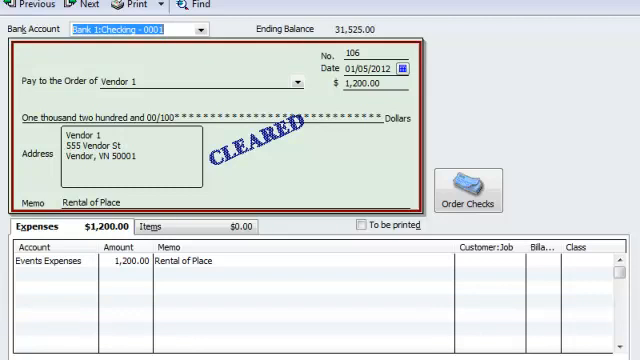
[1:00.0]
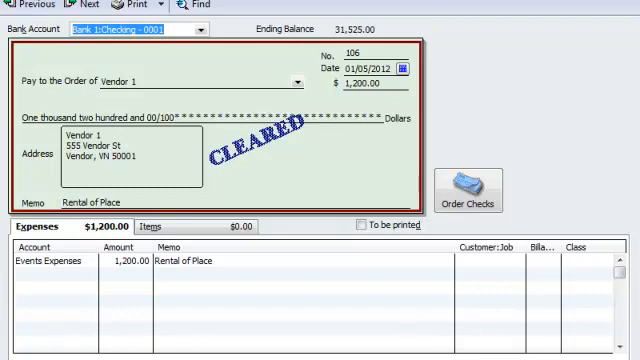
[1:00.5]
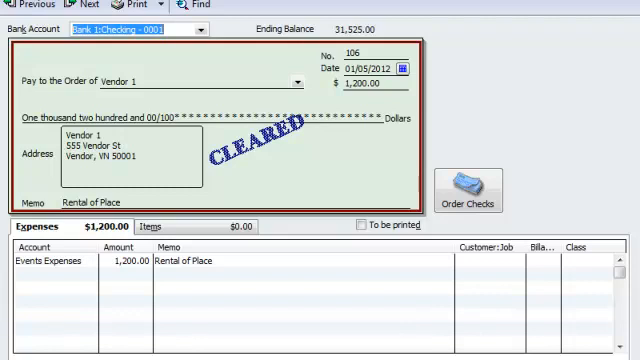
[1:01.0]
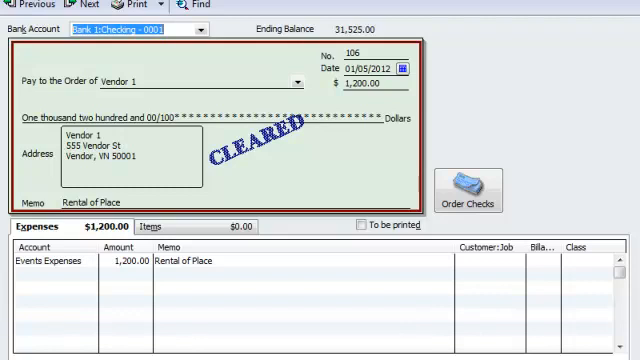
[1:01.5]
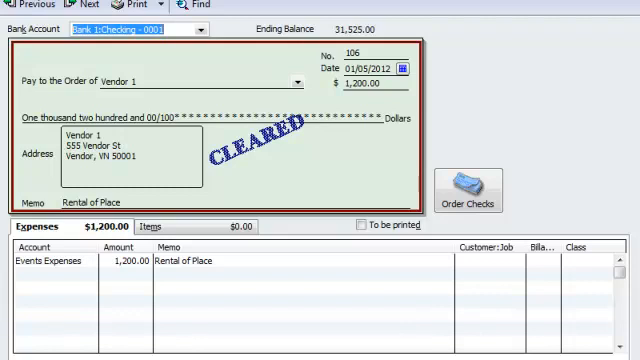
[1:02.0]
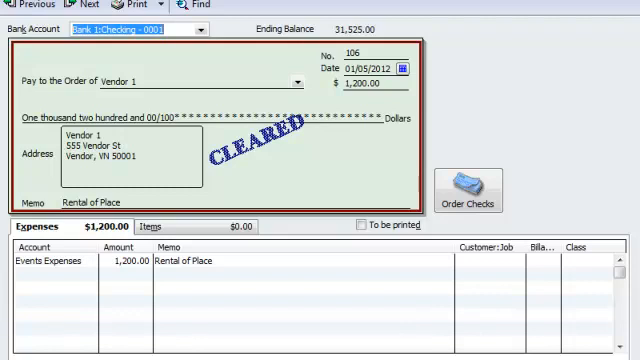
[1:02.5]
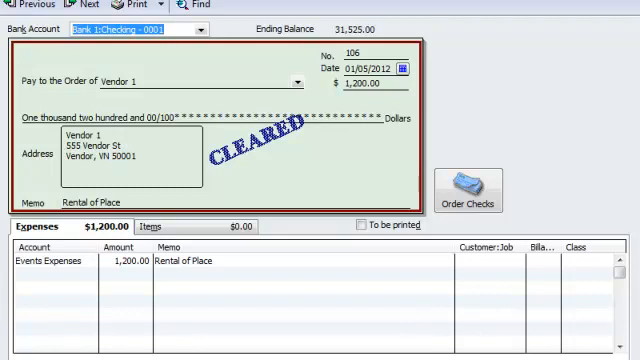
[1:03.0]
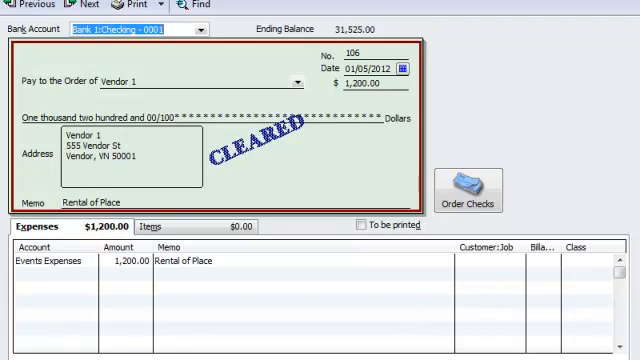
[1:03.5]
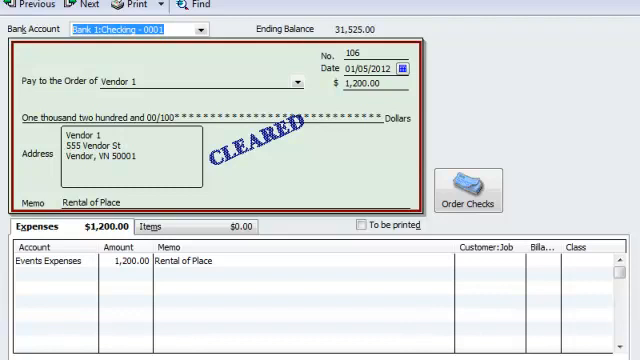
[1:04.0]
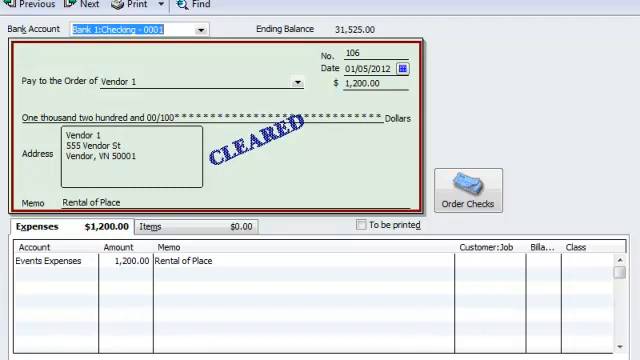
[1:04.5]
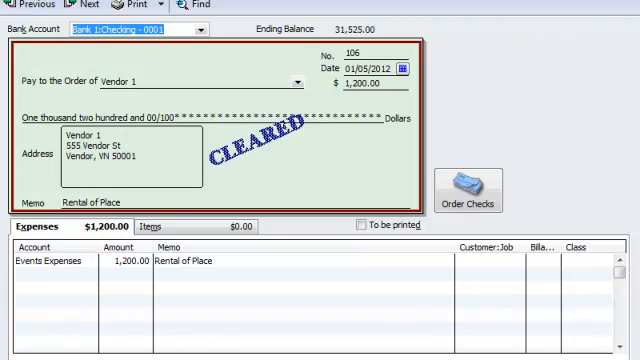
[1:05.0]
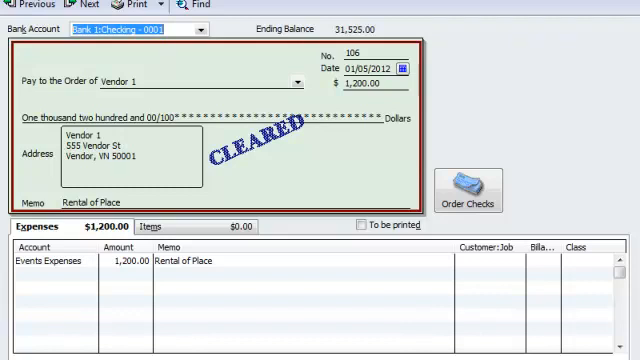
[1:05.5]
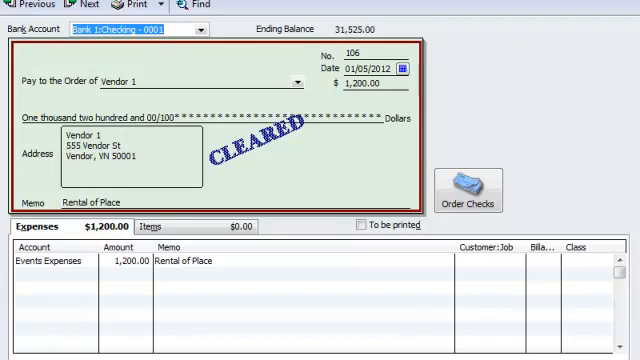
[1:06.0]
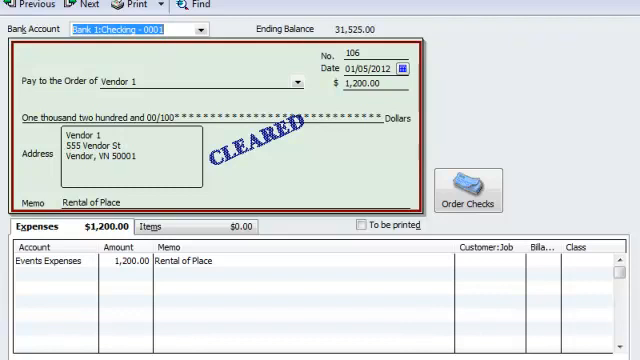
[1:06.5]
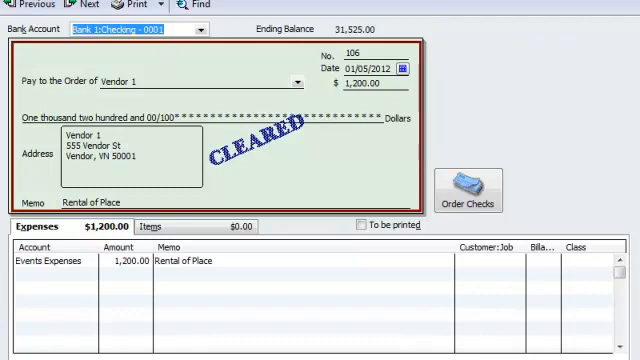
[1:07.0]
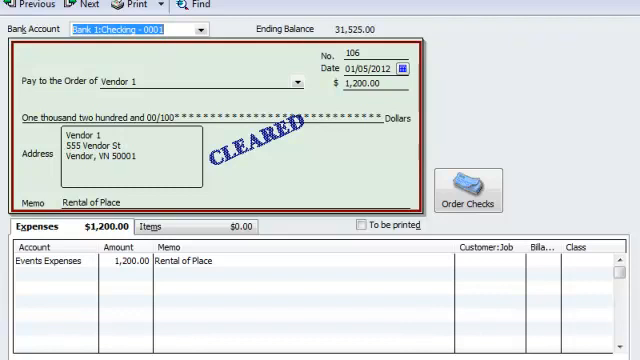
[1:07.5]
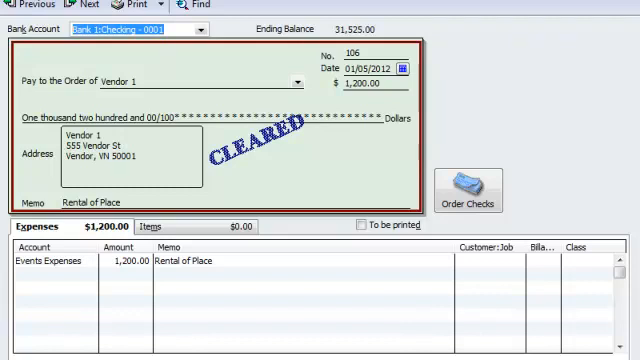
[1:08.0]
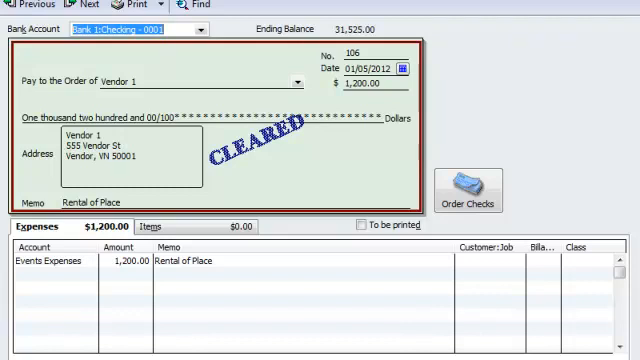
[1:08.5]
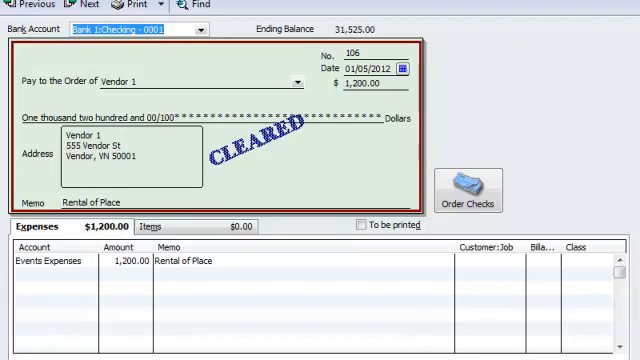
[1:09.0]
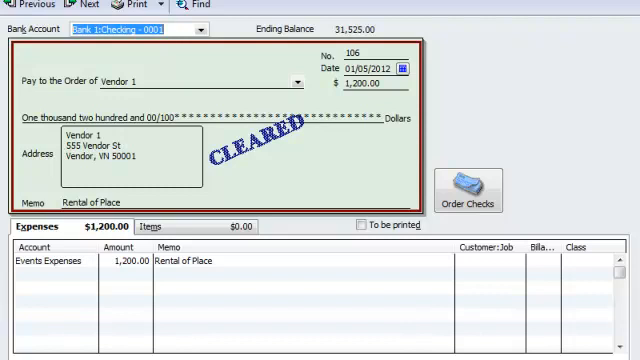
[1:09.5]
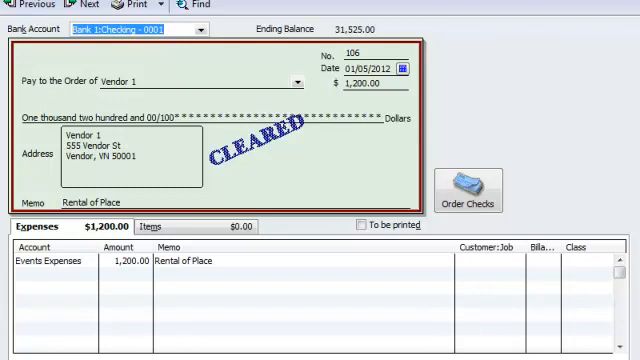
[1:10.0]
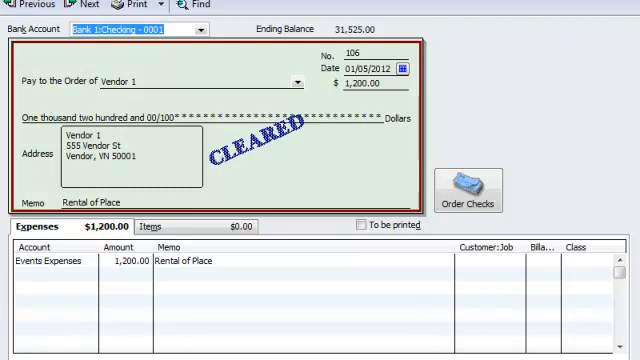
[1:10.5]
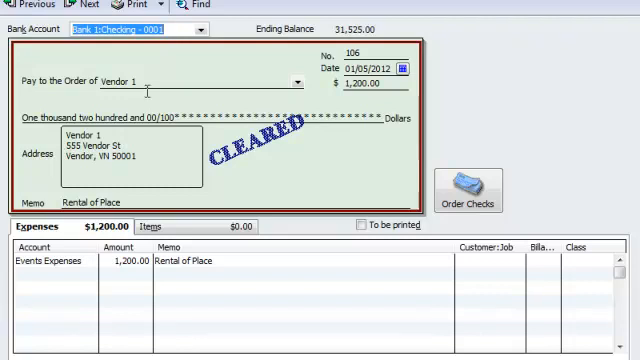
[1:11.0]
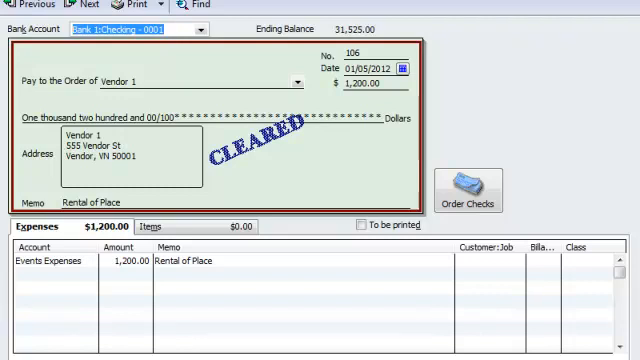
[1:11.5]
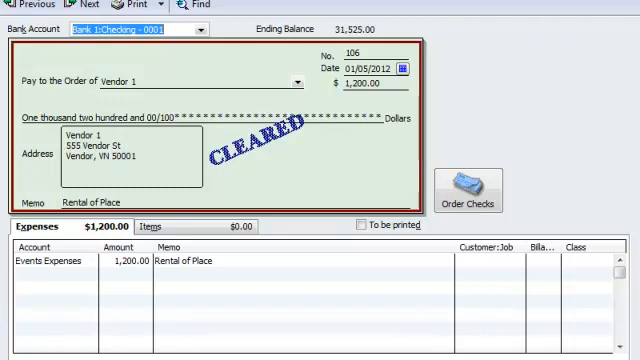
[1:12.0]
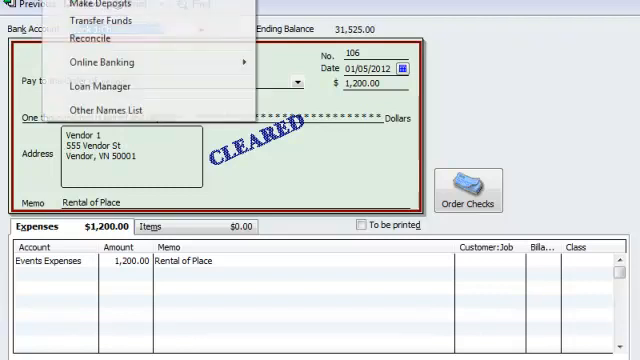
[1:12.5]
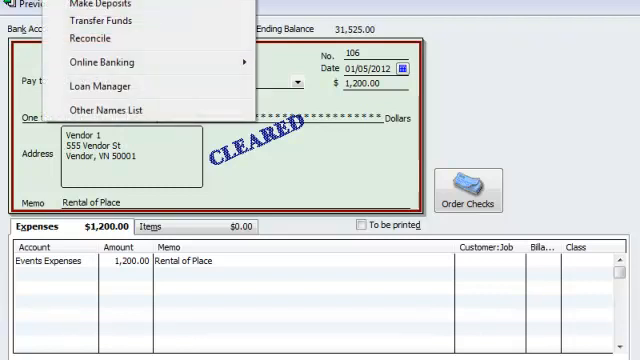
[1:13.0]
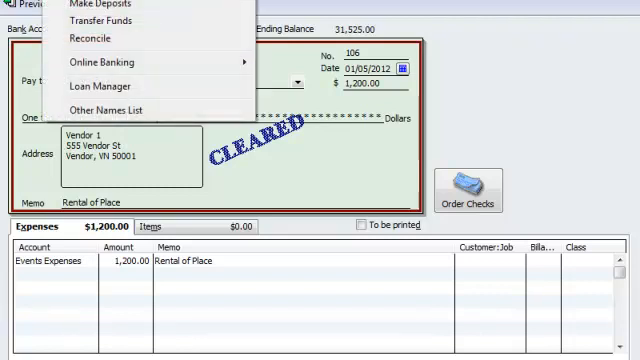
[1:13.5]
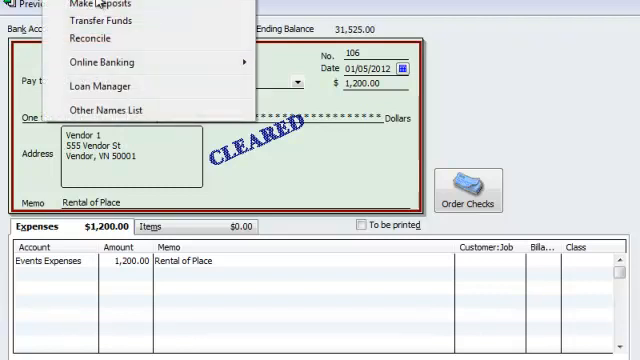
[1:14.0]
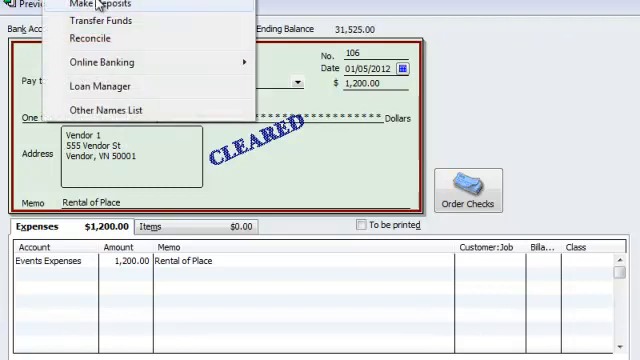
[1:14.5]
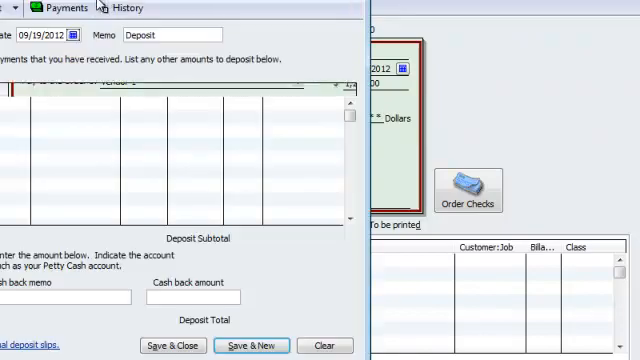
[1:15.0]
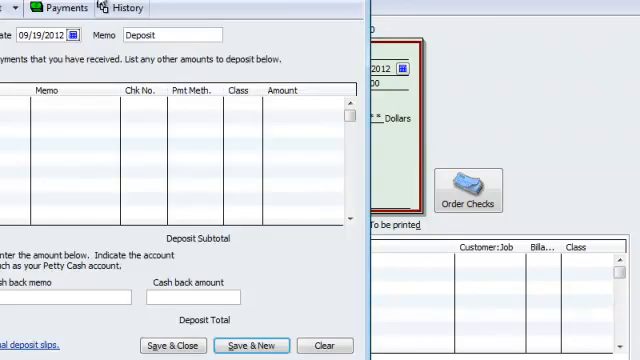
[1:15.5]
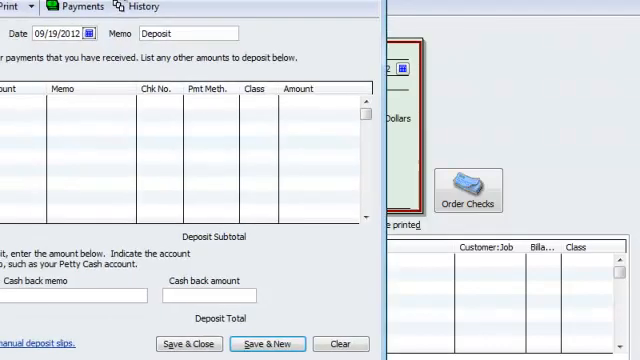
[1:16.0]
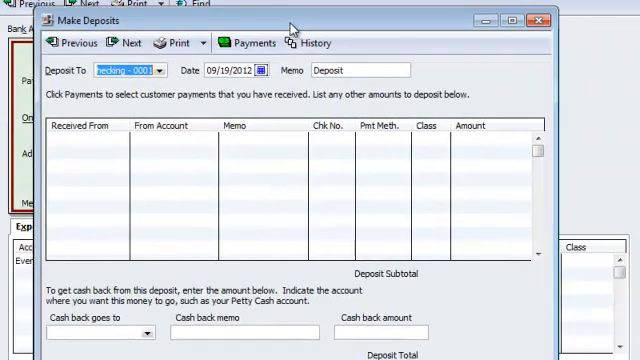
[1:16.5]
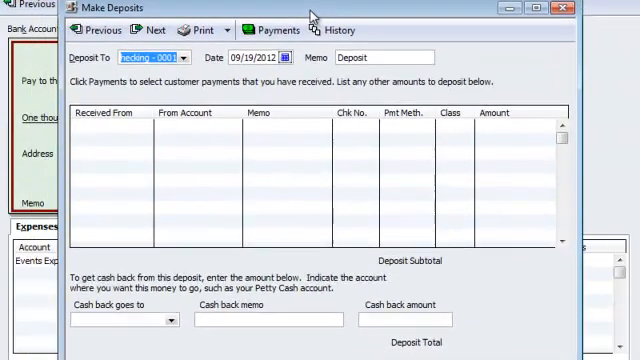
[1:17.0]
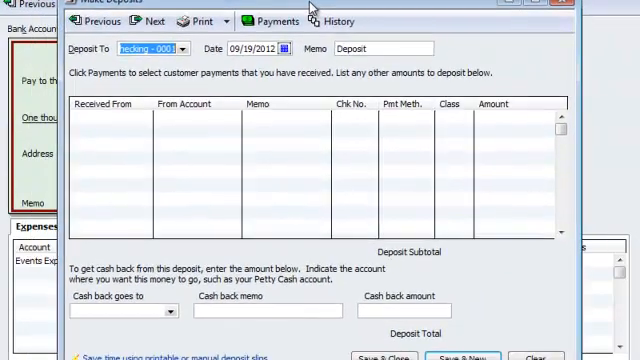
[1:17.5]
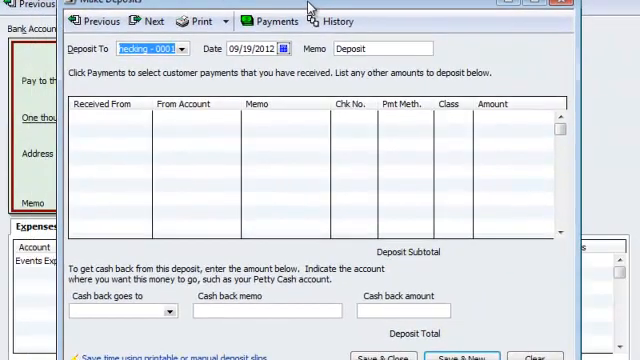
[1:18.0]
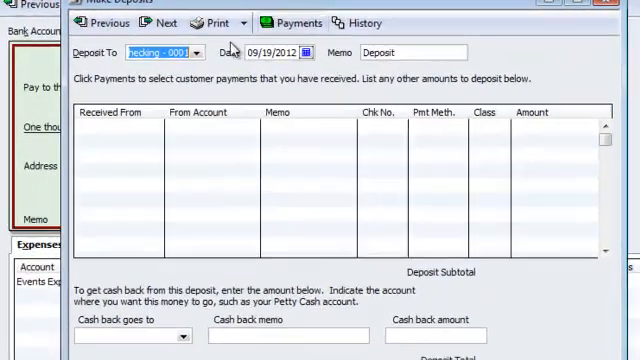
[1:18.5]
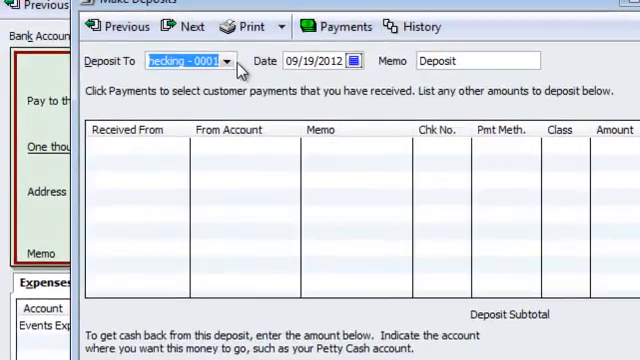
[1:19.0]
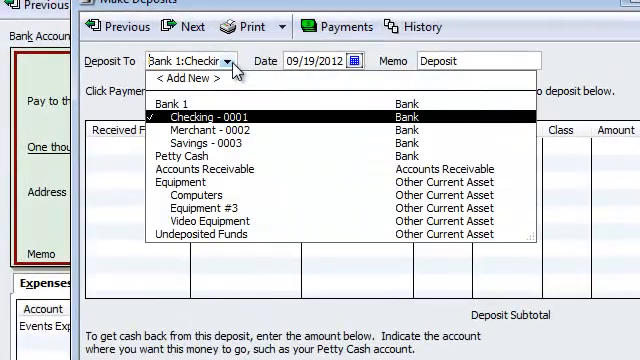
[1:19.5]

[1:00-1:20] A tutorial demonstrates how to use a program for recording refunds and funds based on received checks. The user goes into the options at the top of the program, where a menu lists items such as make deposits, transfer funds, reconcile, online banking, loan manager and other names list. The user clicks make deposits, and another window appears with payments history buttons, a date with a memo, and a list of different payments to choose from; the date is September 19th, 2012. The user then presses a button that opens a new, smaller window, but what is clicked is not shown.